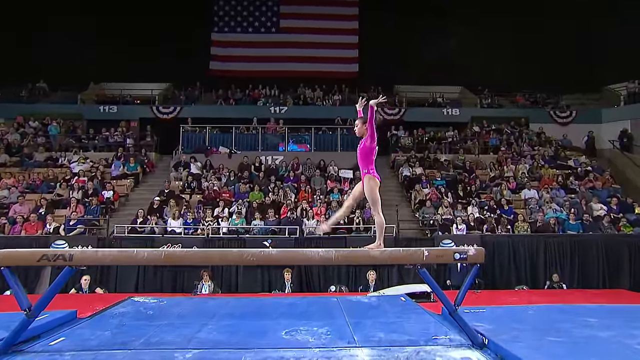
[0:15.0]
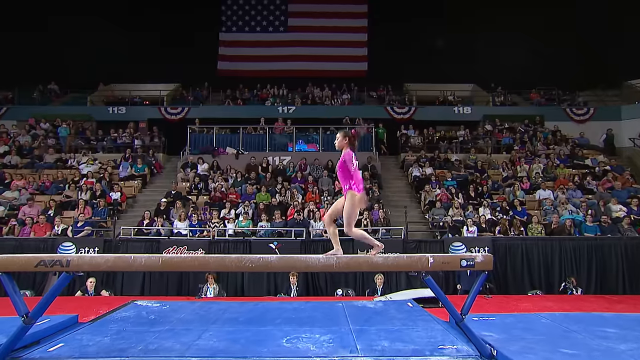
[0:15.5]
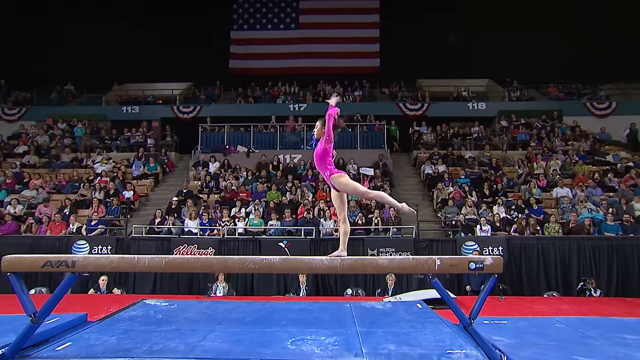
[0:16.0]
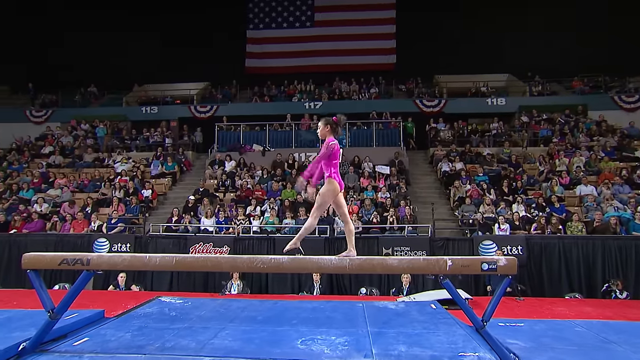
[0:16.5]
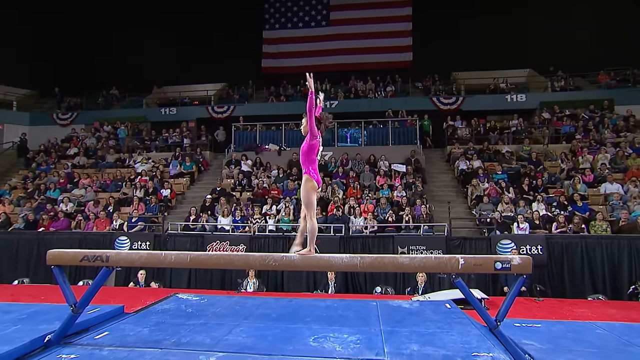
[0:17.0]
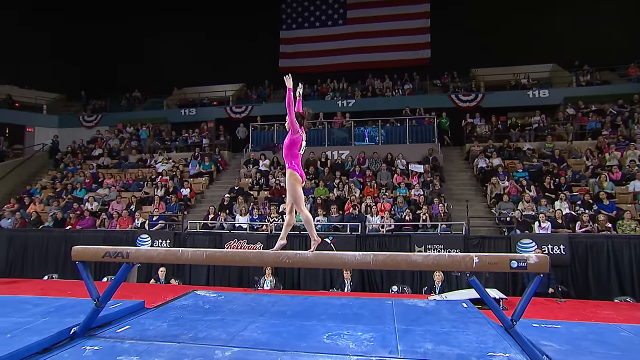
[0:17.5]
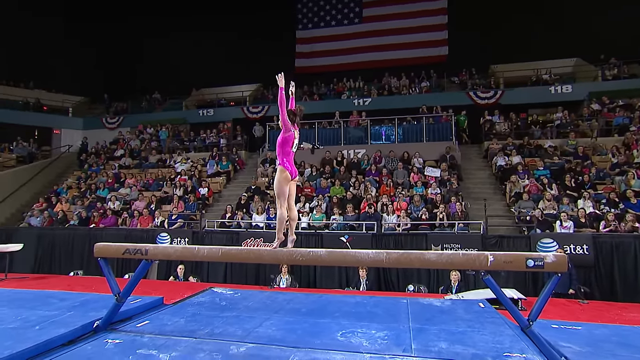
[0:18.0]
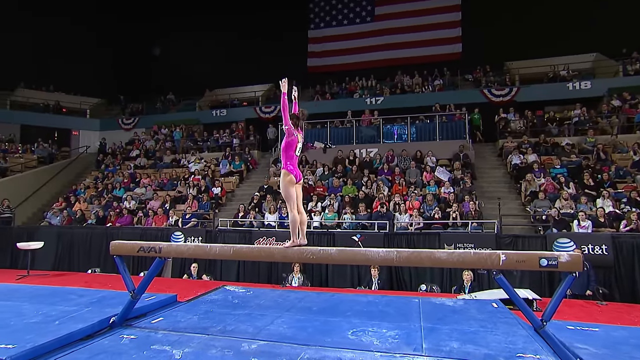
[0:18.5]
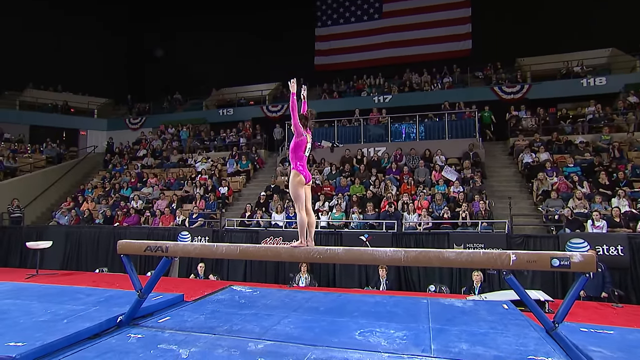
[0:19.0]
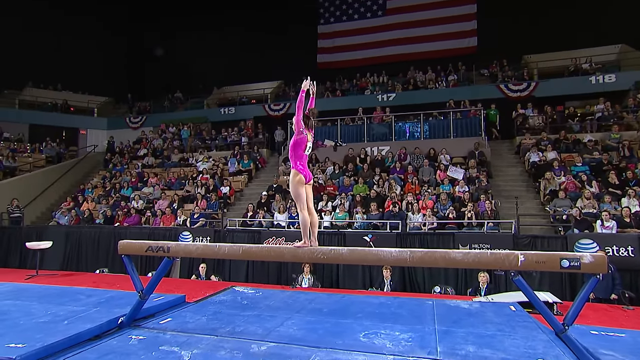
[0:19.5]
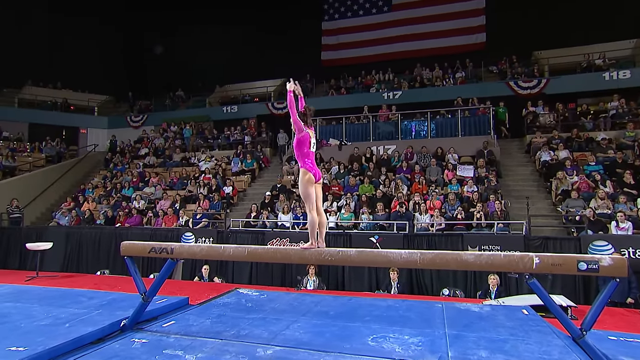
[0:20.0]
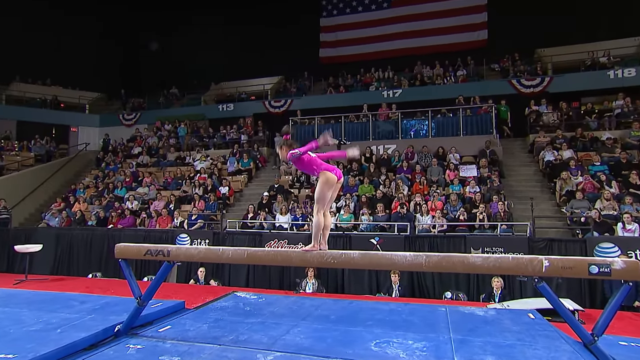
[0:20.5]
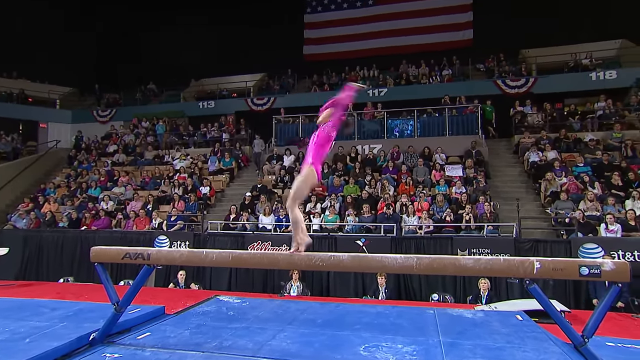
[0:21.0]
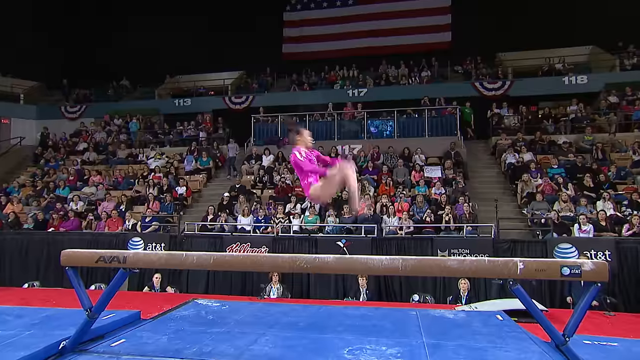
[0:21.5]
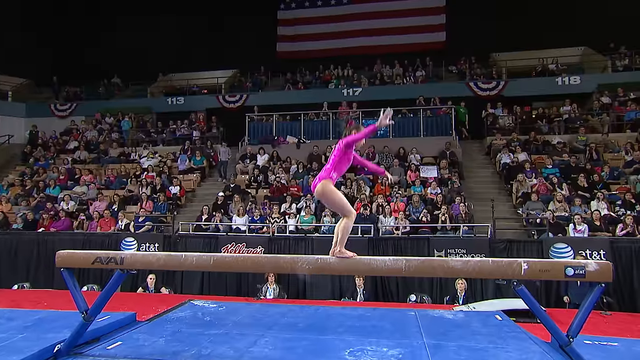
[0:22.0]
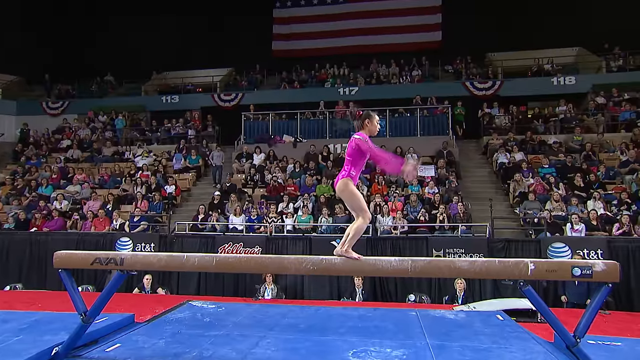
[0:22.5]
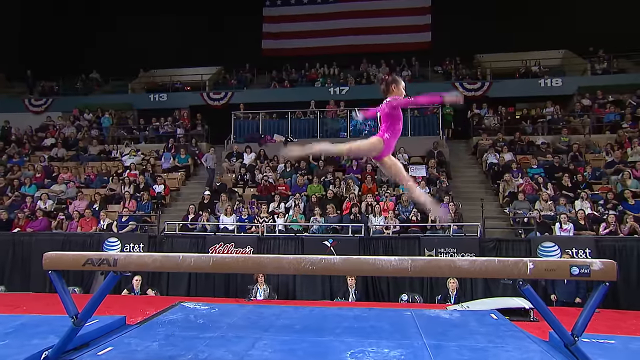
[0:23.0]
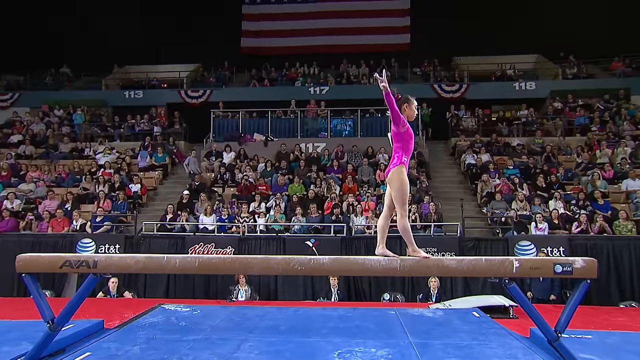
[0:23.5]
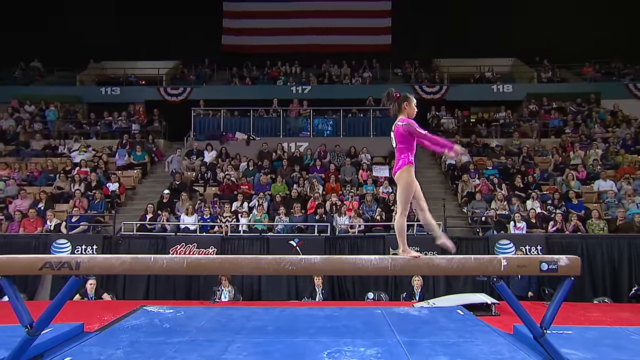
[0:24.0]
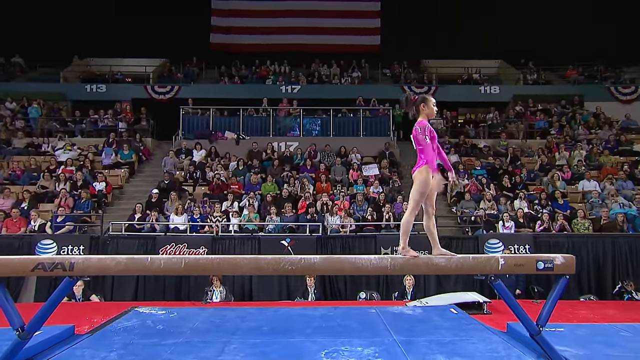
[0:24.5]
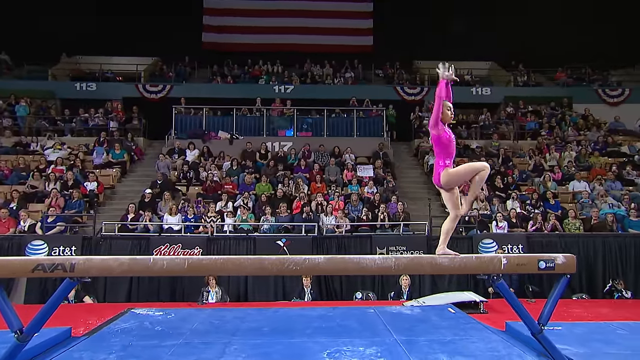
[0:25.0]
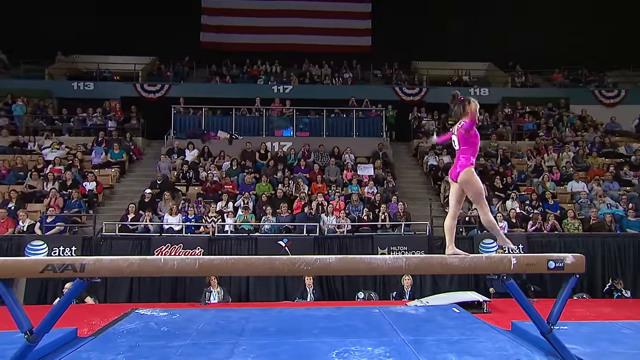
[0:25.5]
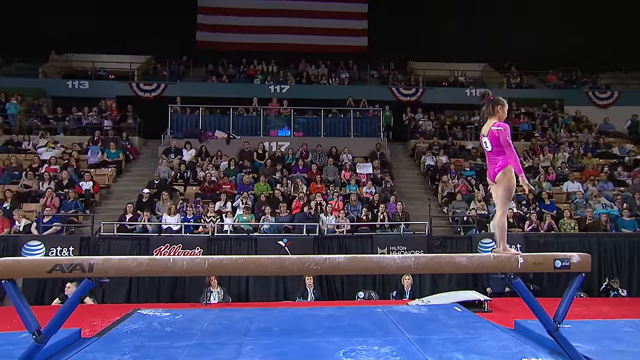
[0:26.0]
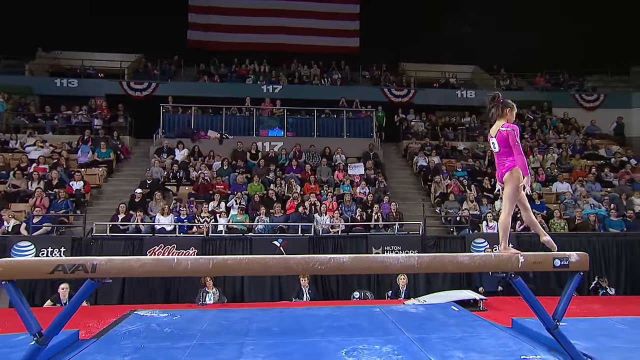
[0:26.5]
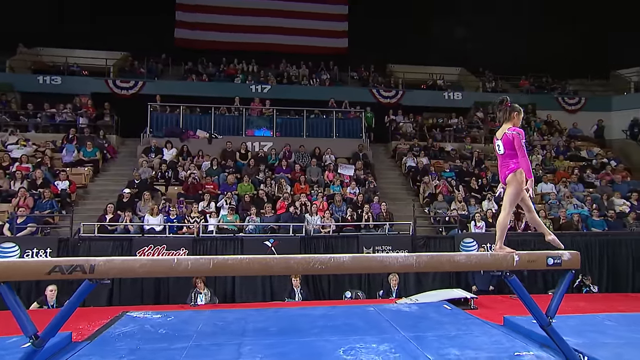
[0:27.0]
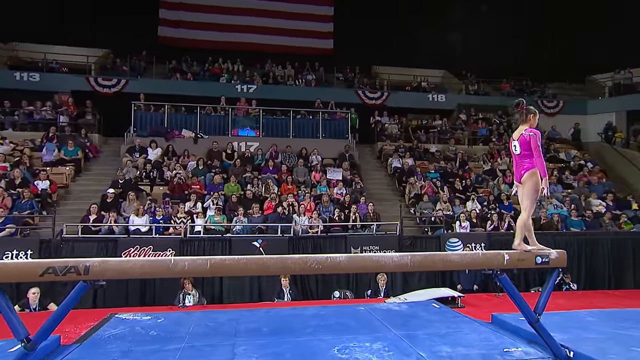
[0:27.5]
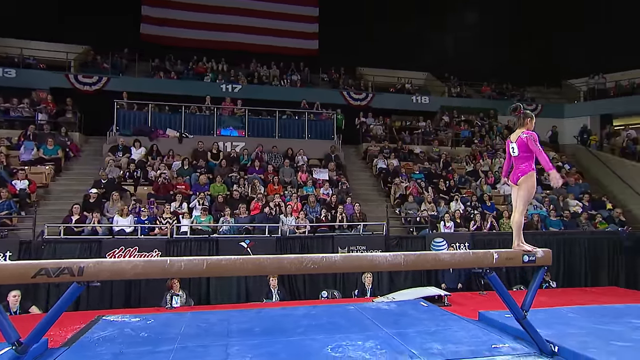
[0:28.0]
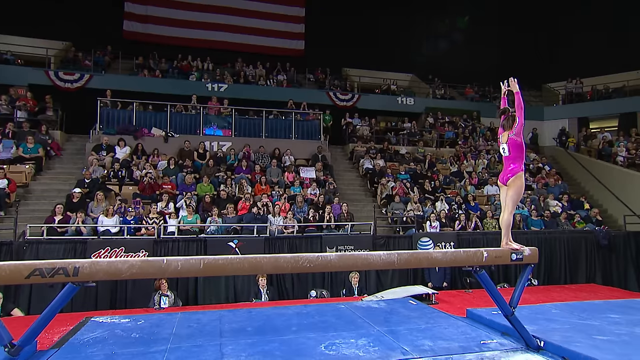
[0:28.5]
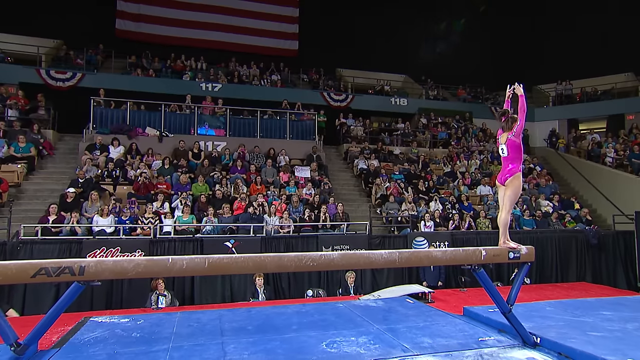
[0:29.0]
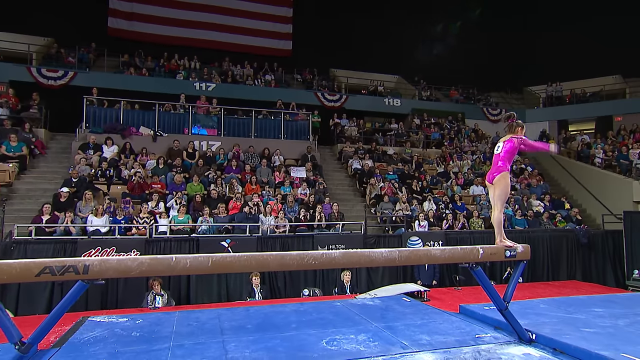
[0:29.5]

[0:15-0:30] The gymnast walks across the beam with her arms in the air, then does a backflip in which her entire body turns completely around to face the other direction. She walks across the beam again, places her arms together in the air, and does a backflip. She stands, then jumps into what appears to be a position with one leg sticking out in front and the other sticking out in the back. Her hair is brunette and done in a bun, and she appears to be young. In the background are sponsorships for AT&T, Kellogg's, USA Gymnastics, and Hilton Honors, plus another AT&T sign. Below the gymnast are four blue cushion mats with what appears to be white dust scattered across them. There are several people in the audience, some holding signs. In the very top section are the numbers 113, 117, and 118. Apparently four judges are sitting and judging the gymnast on the beam.